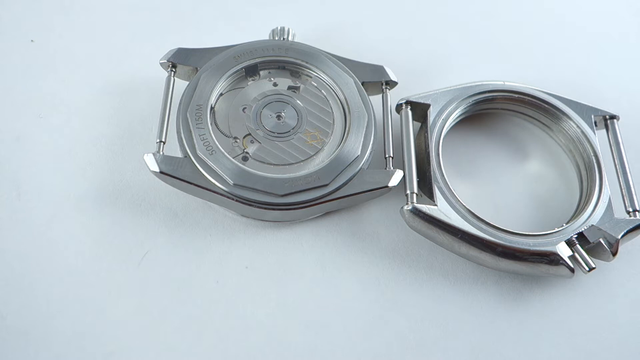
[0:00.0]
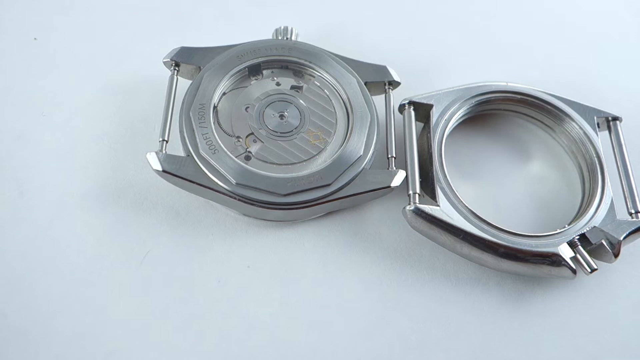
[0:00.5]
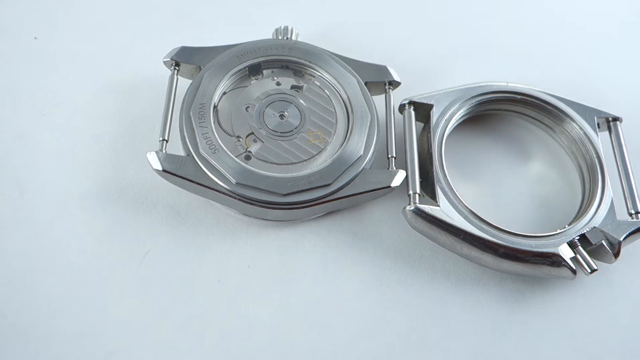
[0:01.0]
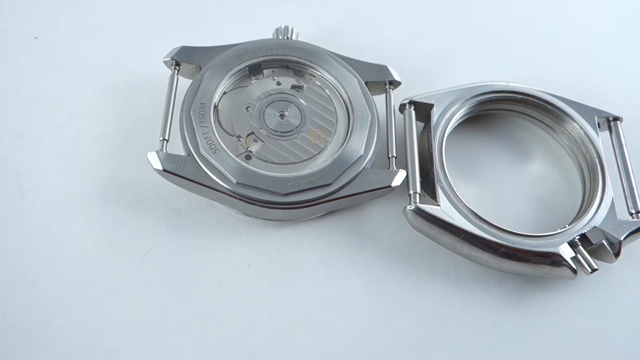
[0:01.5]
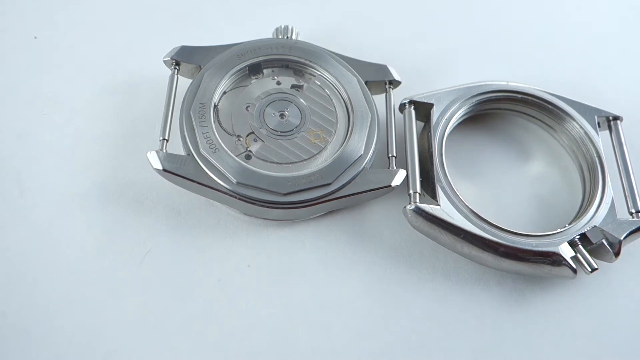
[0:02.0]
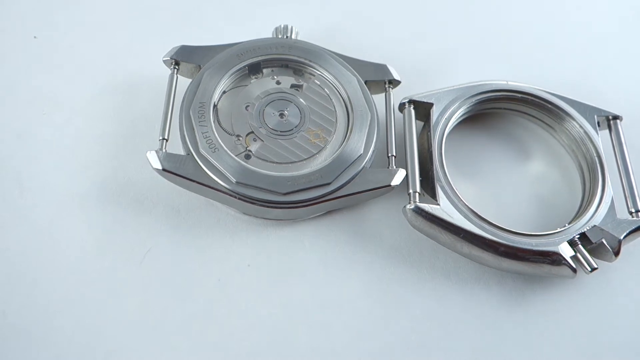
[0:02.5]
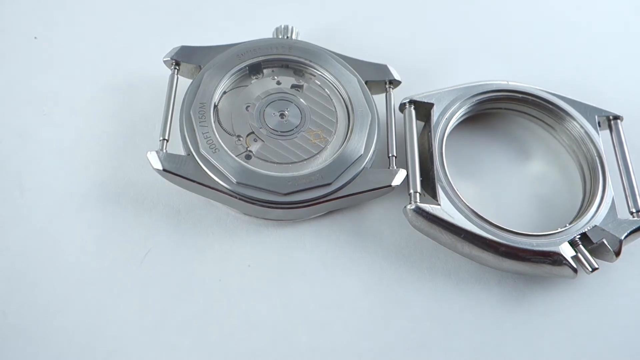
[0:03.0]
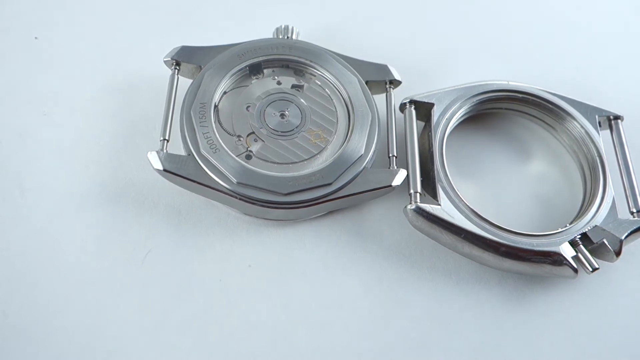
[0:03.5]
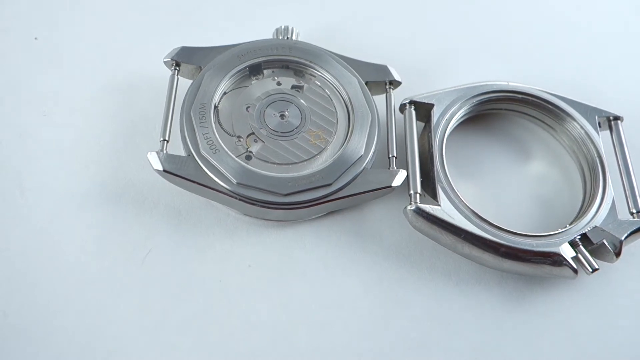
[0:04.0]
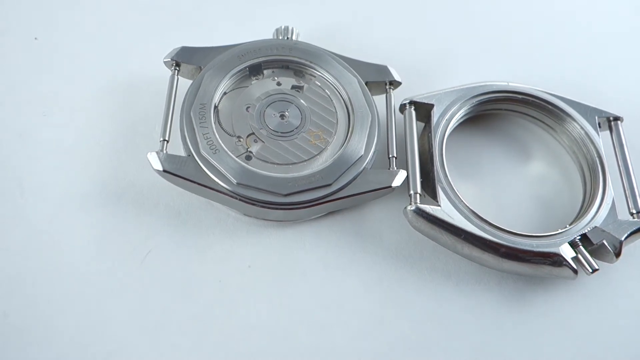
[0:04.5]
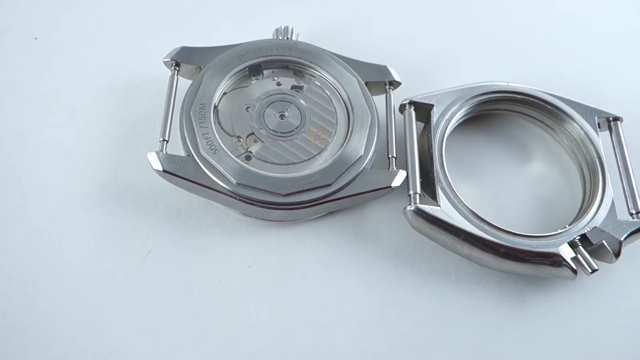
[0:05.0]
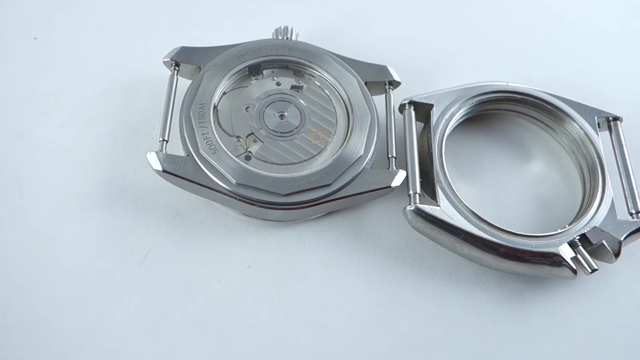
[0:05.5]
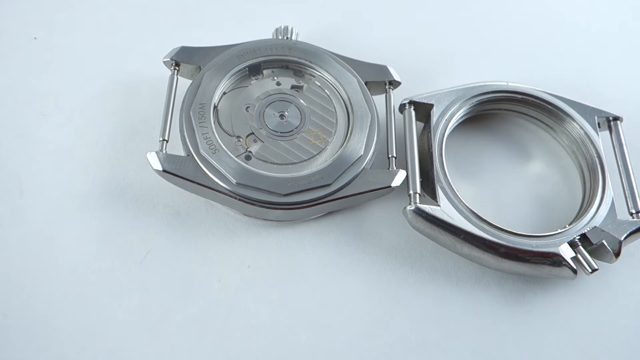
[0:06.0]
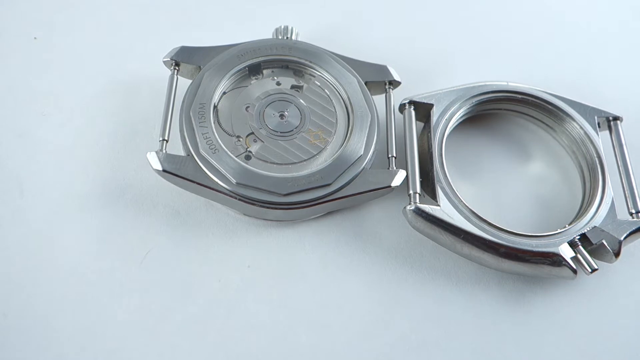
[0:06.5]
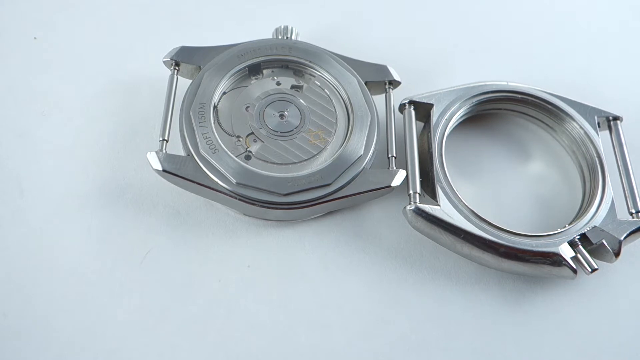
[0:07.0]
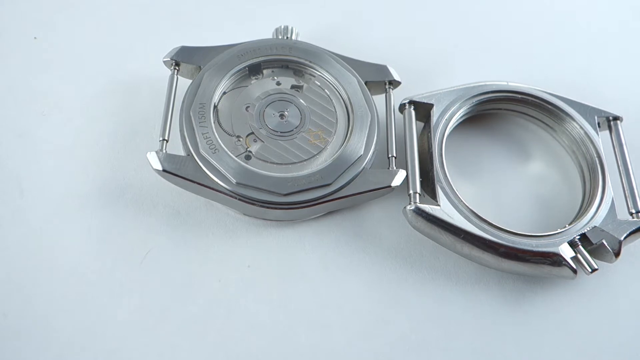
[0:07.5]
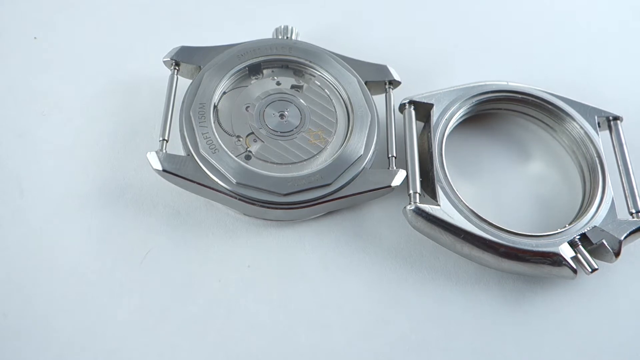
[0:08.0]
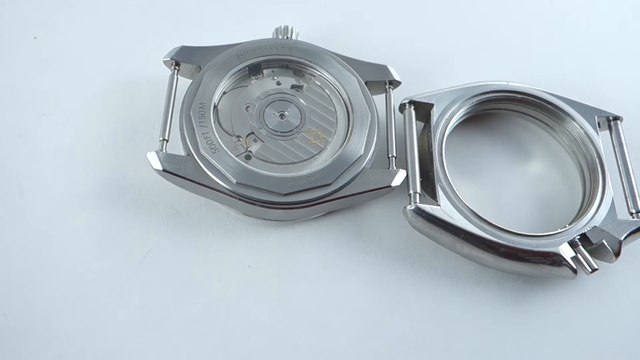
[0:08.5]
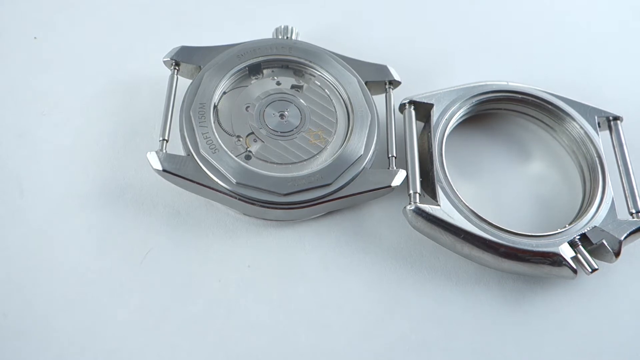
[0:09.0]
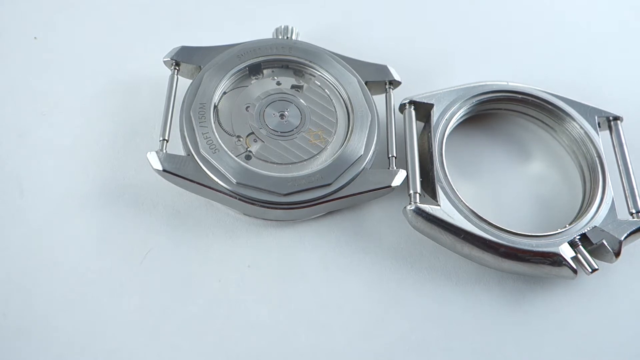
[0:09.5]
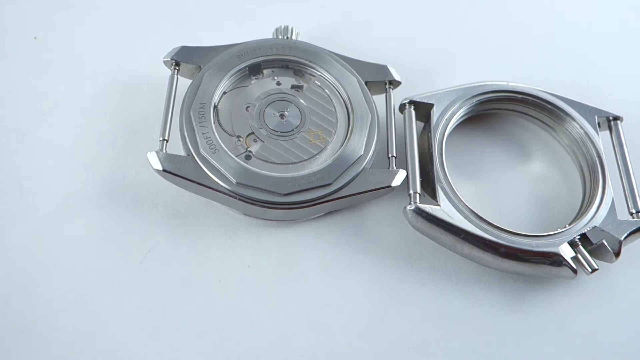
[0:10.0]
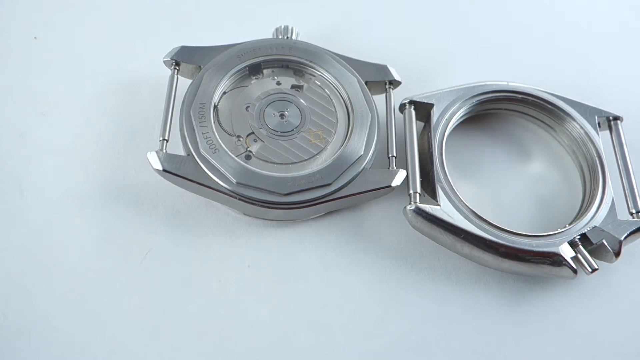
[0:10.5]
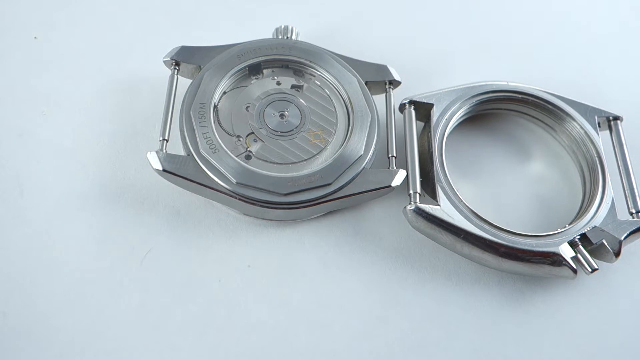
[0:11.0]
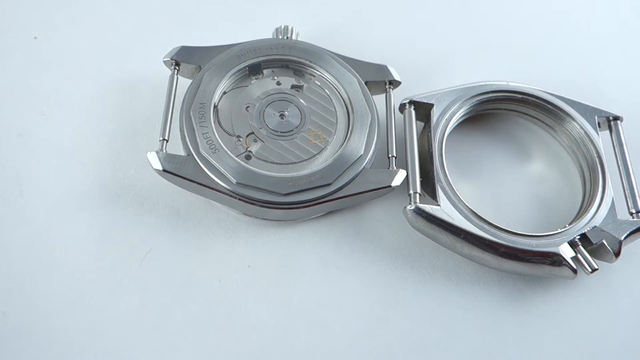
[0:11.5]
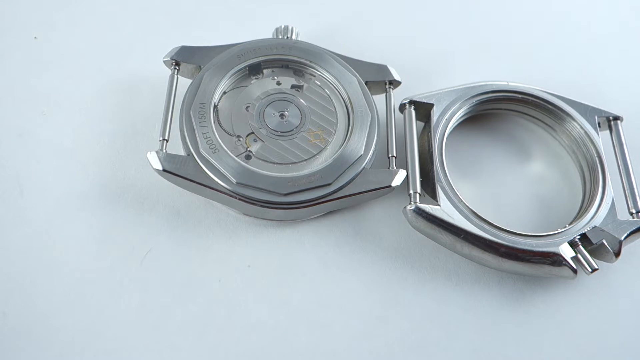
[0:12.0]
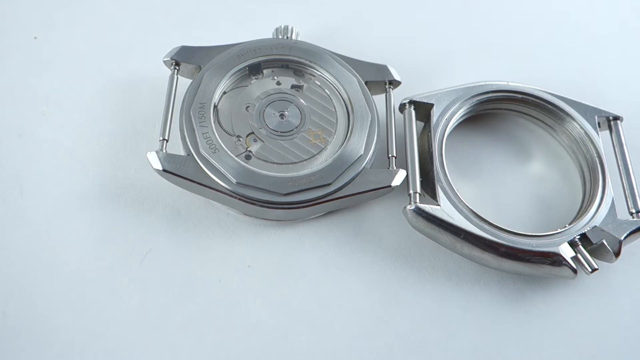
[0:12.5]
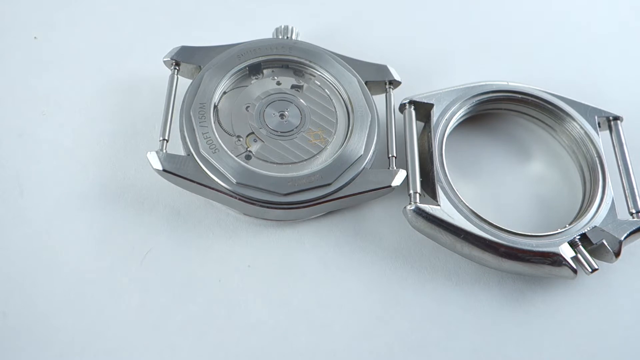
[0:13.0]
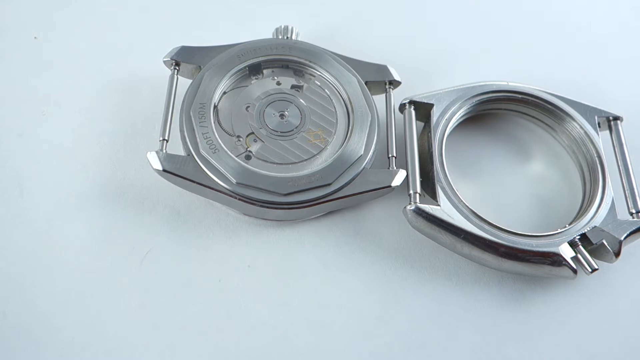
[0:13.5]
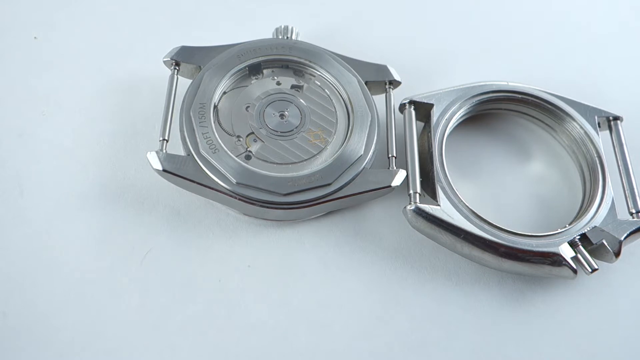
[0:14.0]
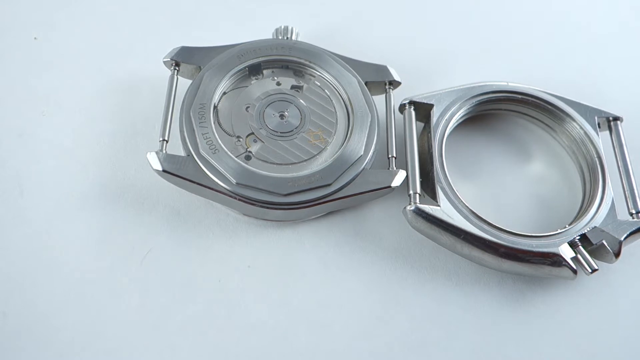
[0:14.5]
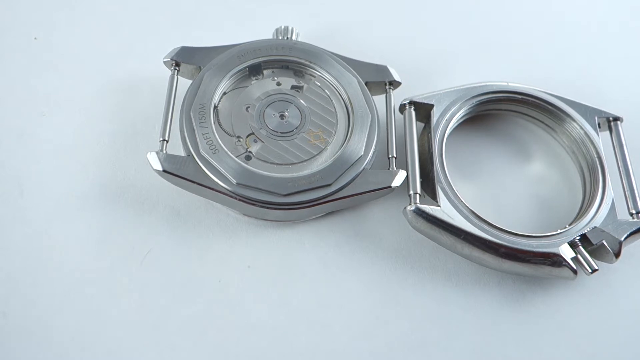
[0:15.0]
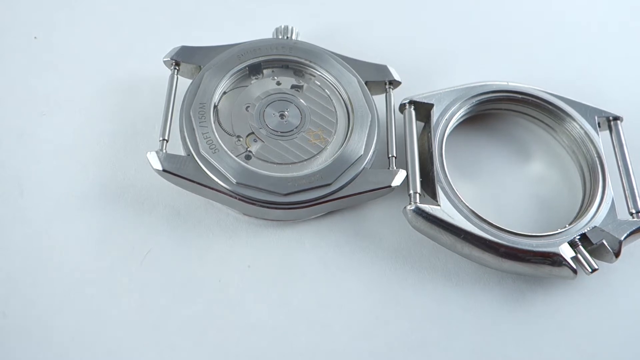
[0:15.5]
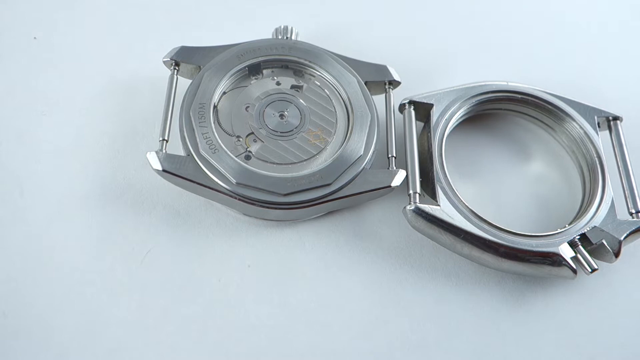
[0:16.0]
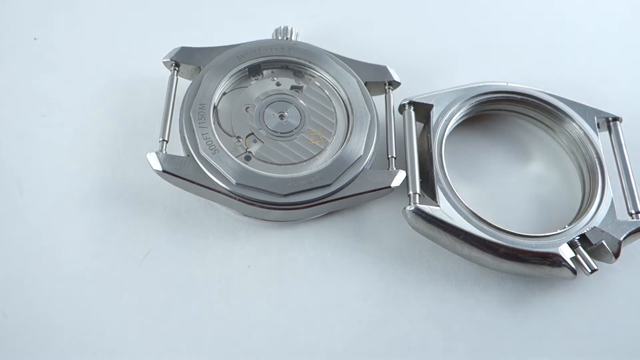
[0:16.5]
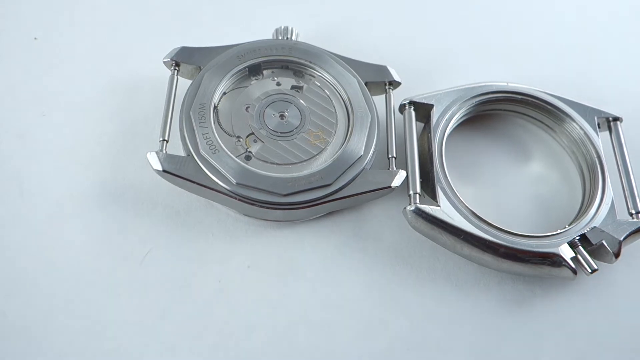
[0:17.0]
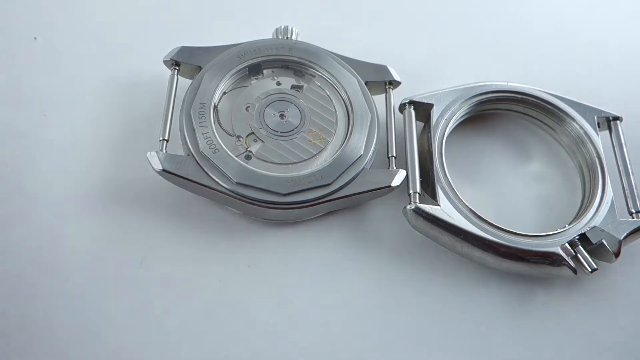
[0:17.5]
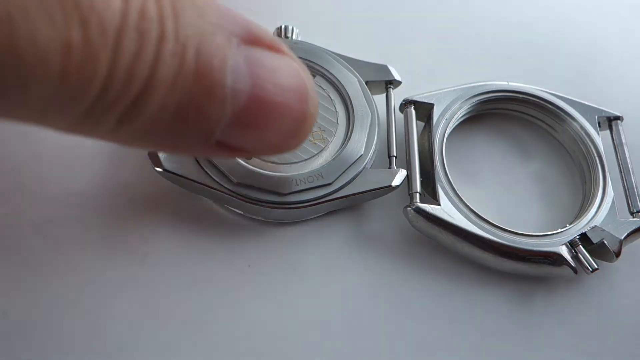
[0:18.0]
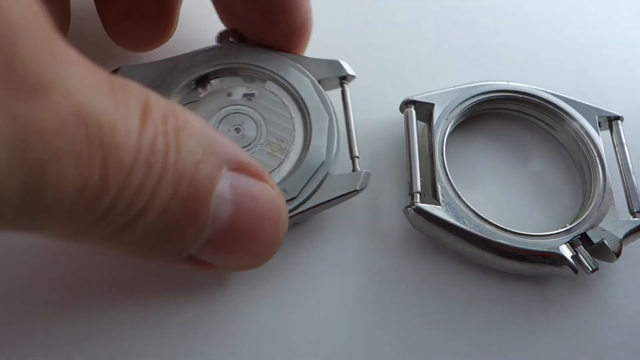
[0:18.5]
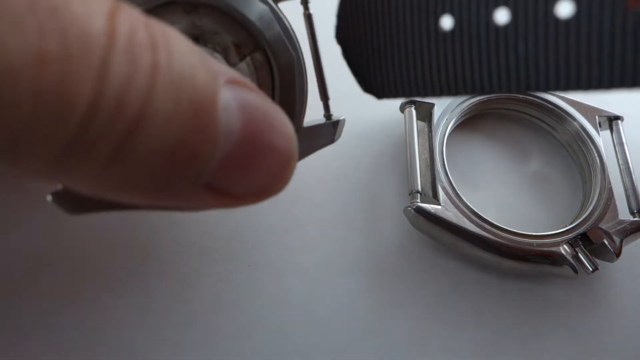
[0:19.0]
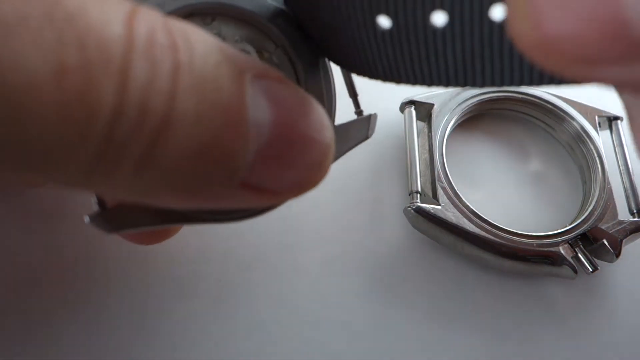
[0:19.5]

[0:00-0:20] Against a white and grey background, a silver object appears starting at the right-hand side, and the view pans over to around three quarters of the left-hand side. There are circles within its two pieces, one piece on the right-hand side and one on the left-hand side; it looks like a watch face that has been taken apart. The camera hovers over this section. A finger and thumb come from the top left-hand corner of the screen, reach down, pinch and hold the piece on the left-hand side. The person's right hand then appears, finger and thumb visible, with a black watch strap in the top right-hand corner of the screen. They move their left and right hands together so that the watch strap on the right is touching the watch face on the left. Three circles are visible on the watch strap.